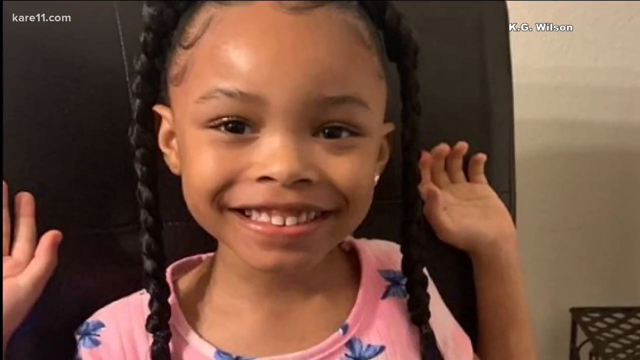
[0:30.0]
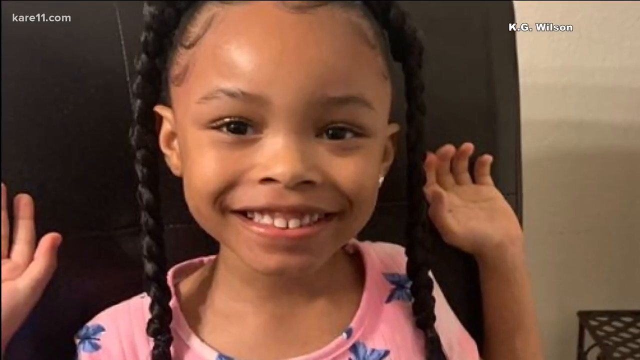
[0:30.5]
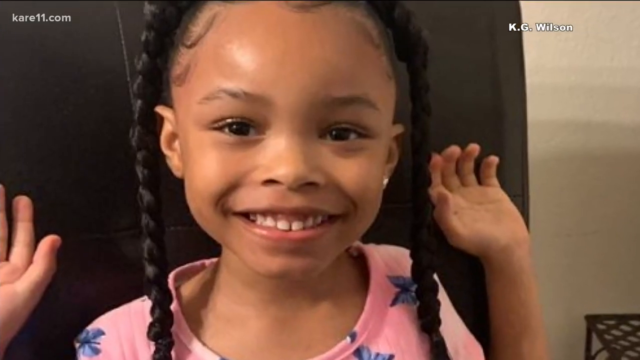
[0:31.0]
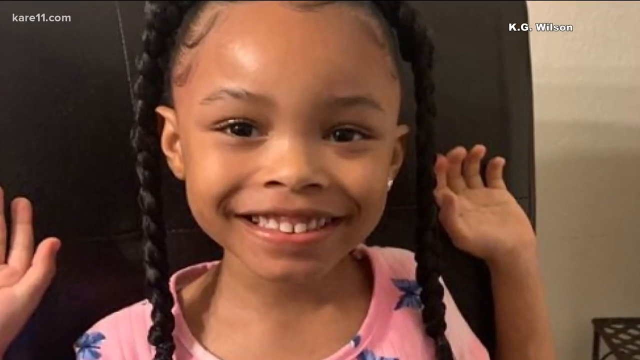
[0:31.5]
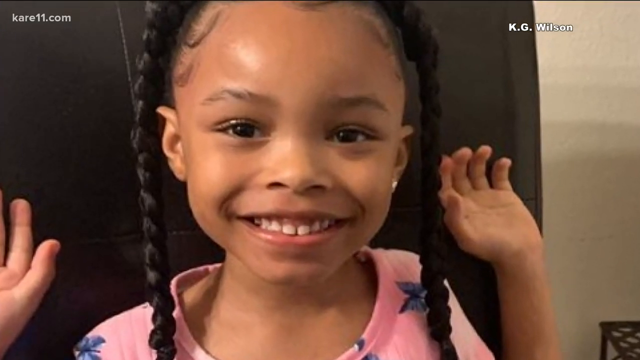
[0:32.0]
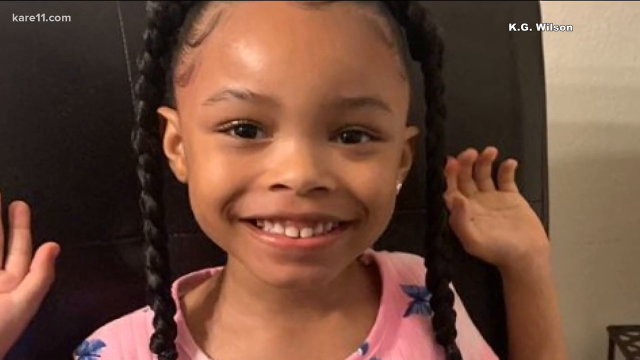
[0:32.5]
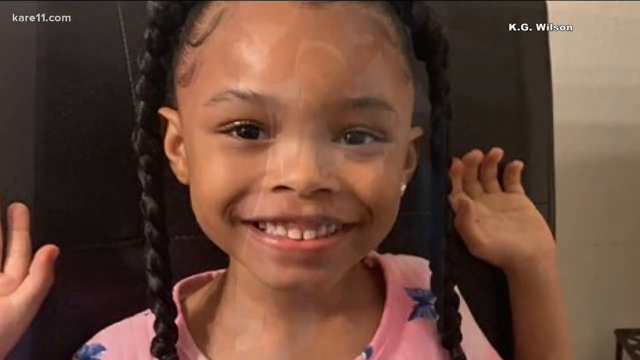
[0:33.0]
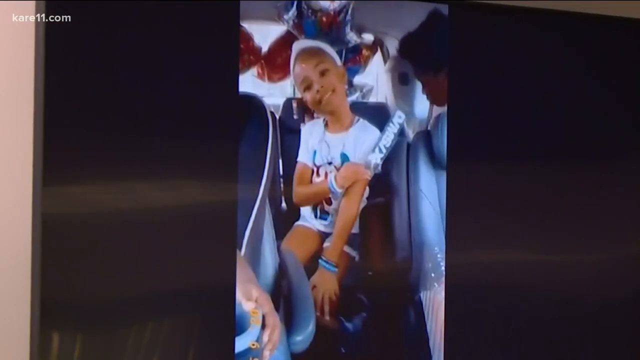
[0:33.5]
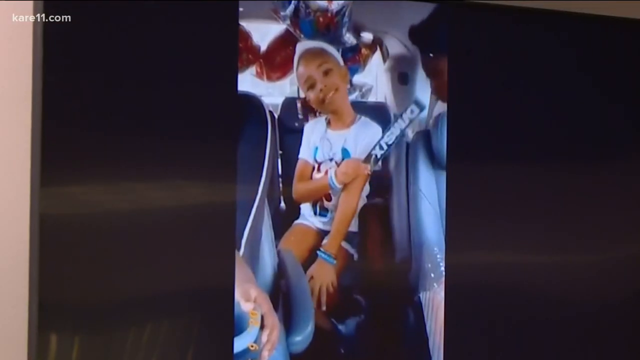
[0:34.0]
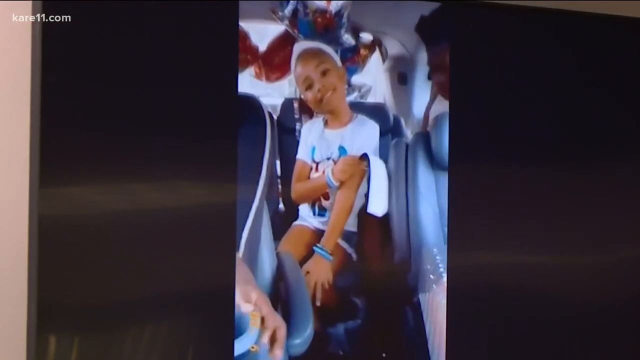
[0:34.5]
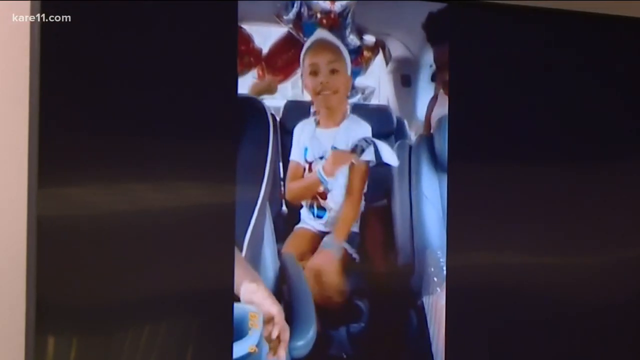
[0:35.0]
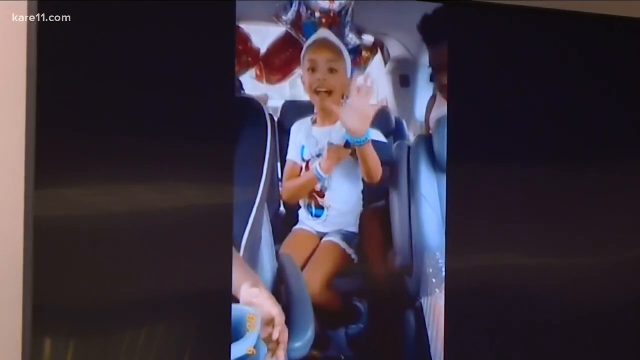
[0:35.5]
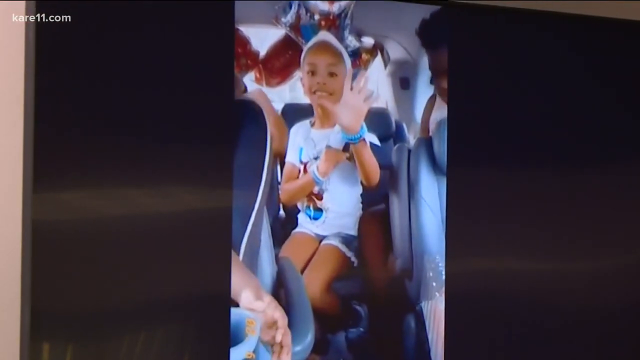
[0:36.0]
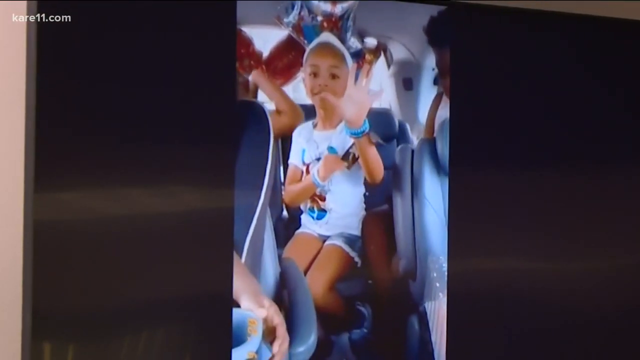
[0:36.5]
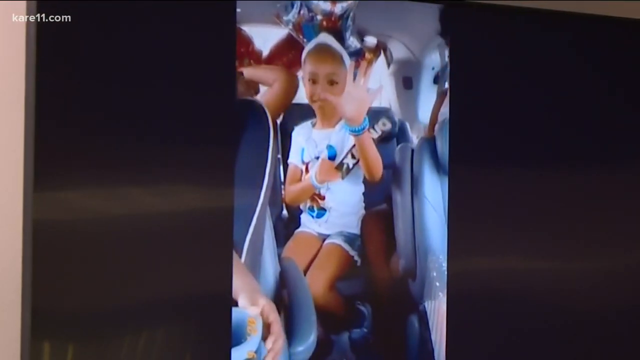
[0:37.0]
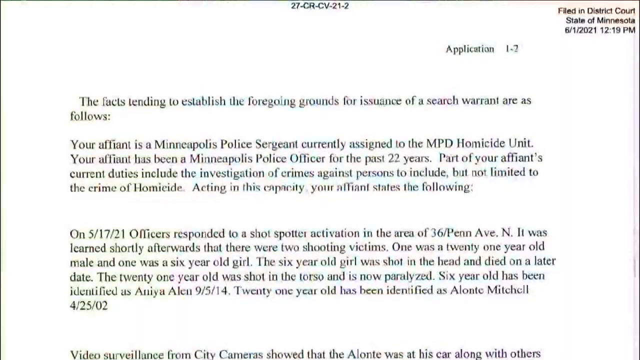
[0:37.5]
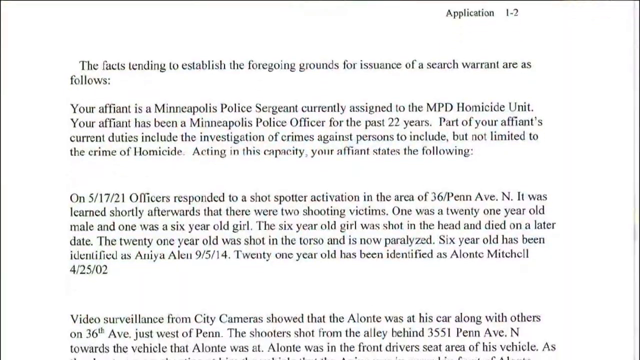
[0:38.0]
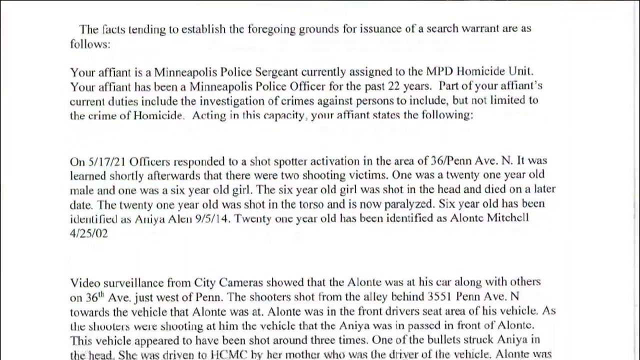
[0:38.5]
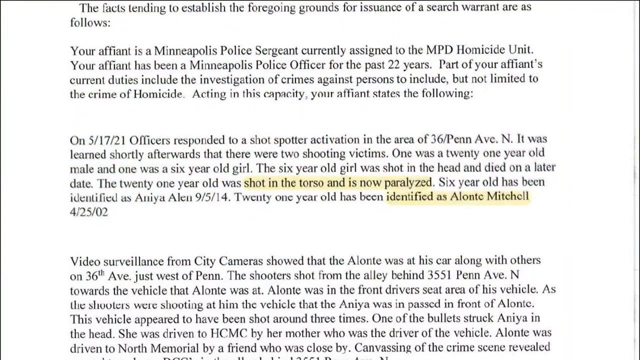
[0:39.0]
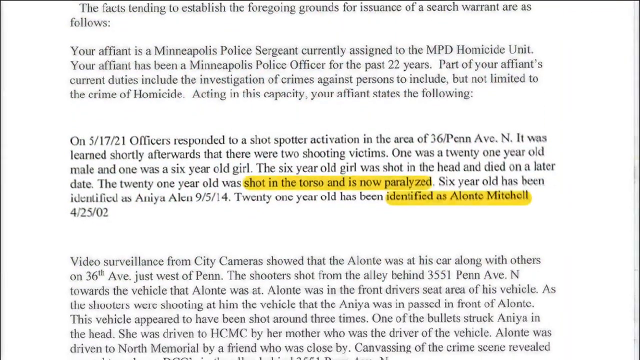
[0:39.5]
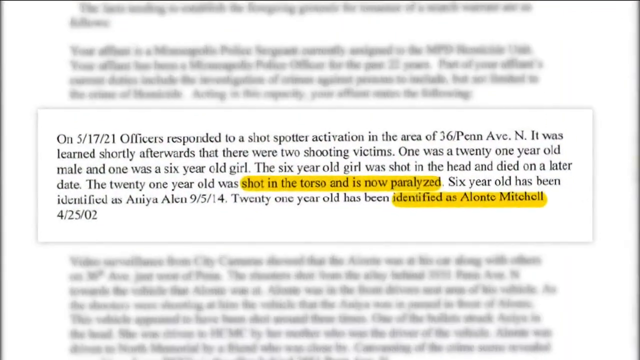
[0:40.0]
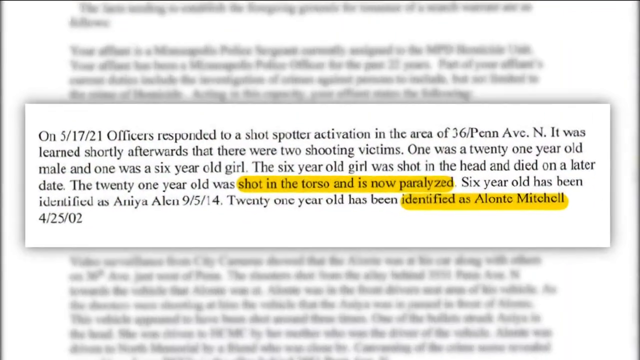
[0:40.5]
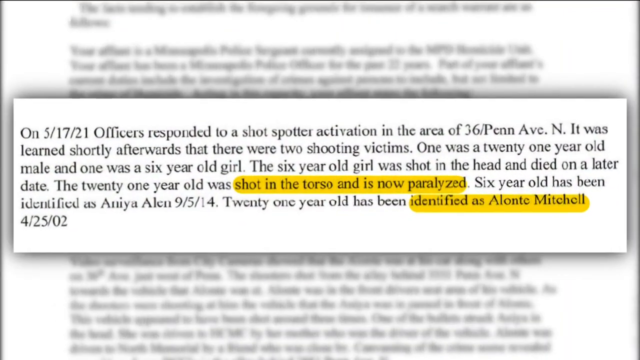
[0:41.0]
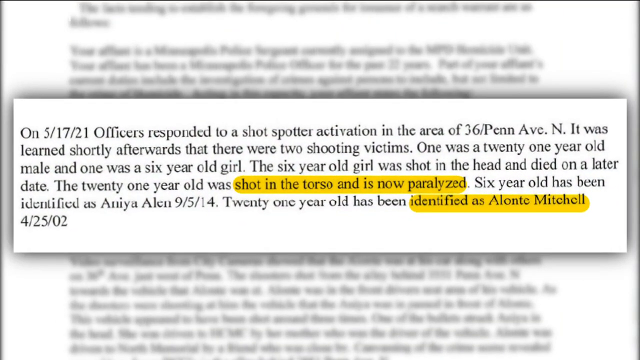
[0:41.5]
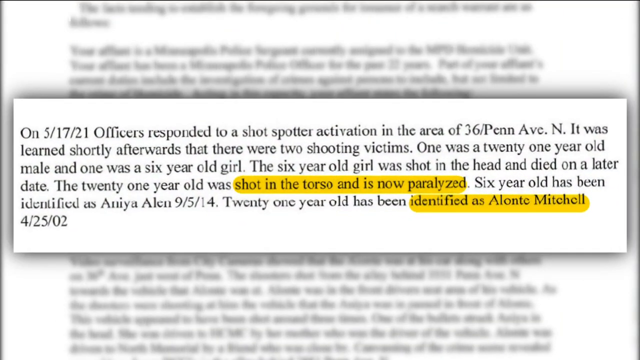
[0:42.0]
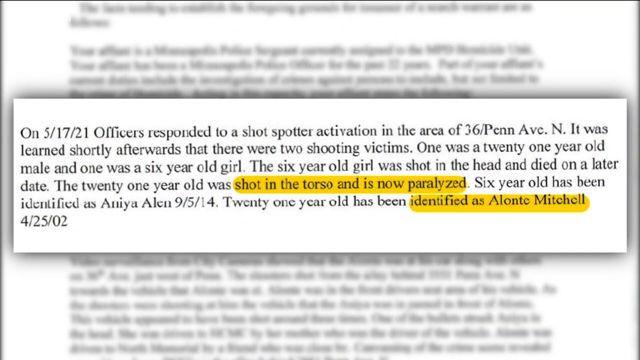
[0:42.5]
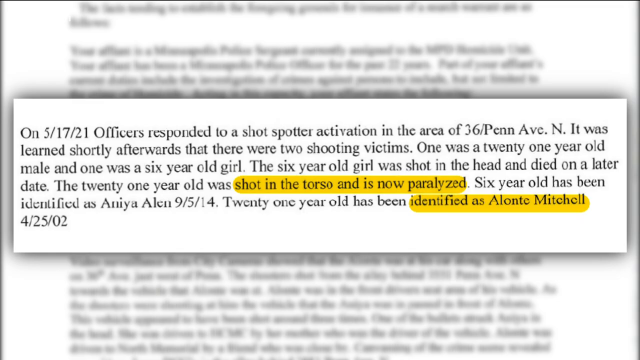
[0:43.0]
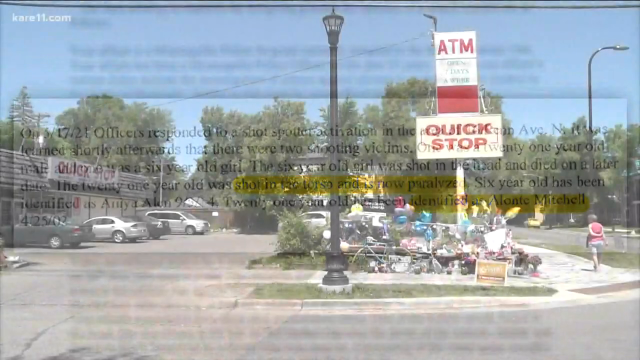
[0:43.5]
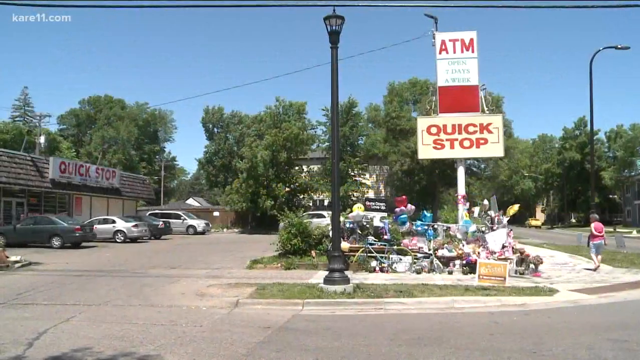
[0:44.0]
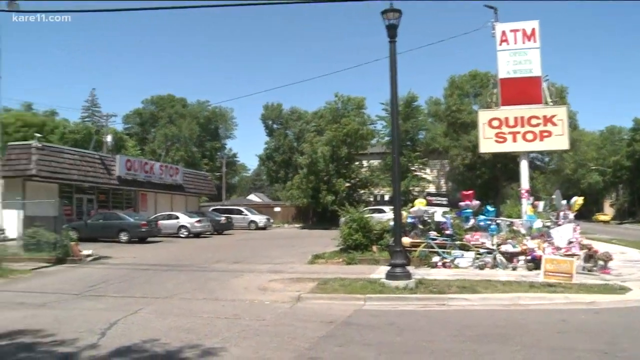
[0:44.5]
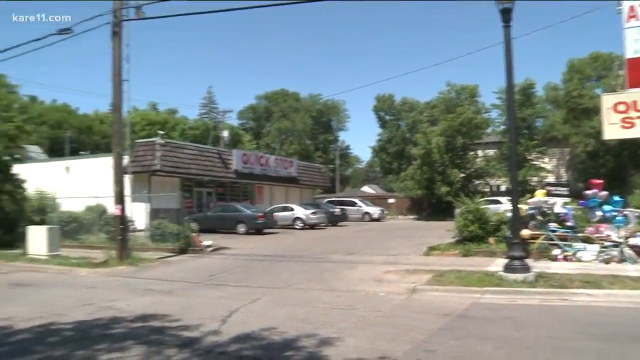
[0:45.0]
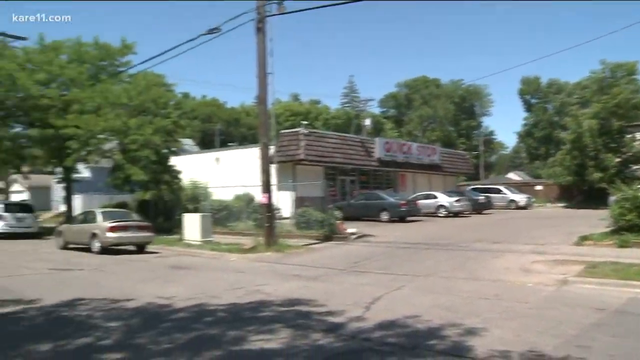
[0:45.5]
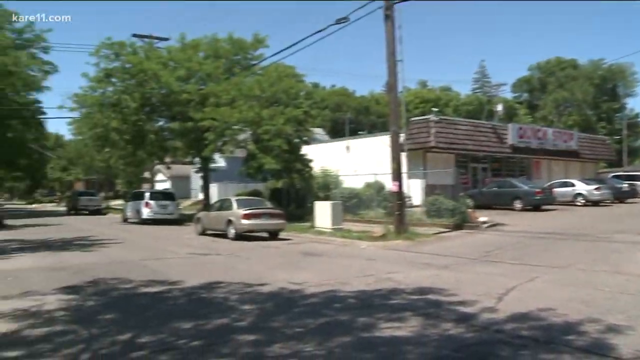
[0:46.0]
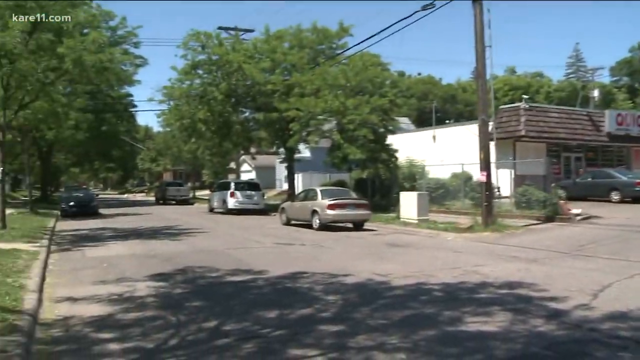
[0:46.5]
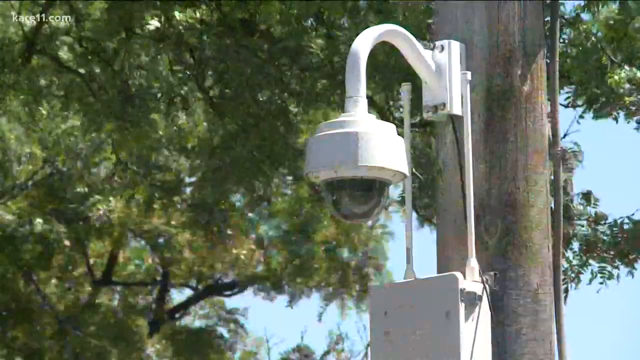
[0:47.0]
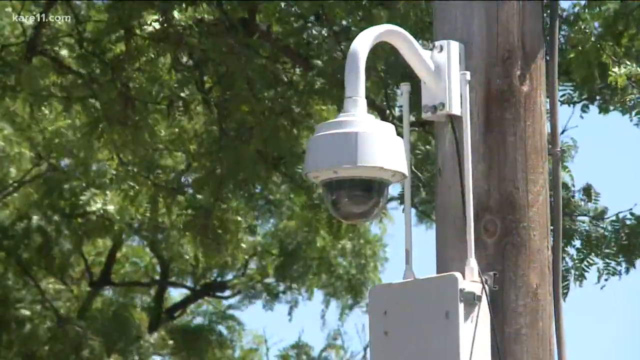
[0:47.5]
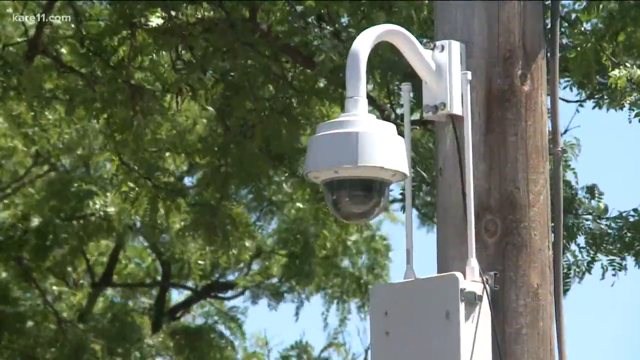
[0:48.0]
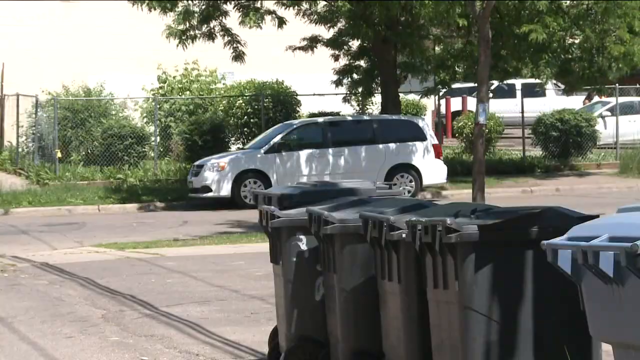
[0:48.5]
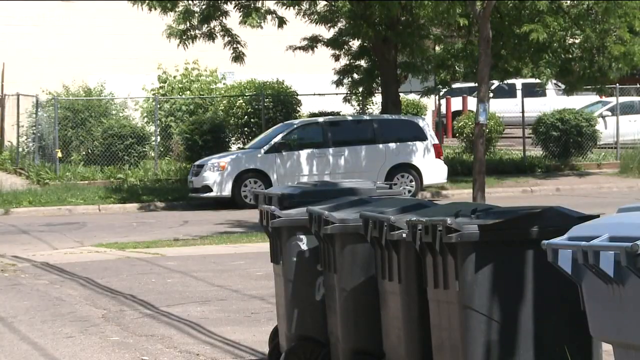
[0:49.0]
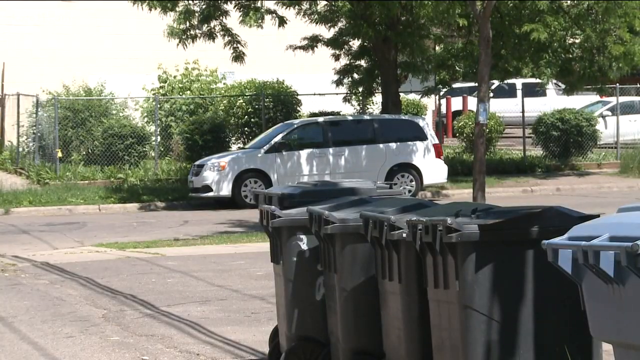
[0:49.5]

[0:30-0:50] The little girl is shown smiling, wearing a pink top with blue butterflies. In what looks like a home video, she says hi and waves with her left hand; it may have been her birthday. Paperwork then lists the facts supporting the search warrant, stating that the affiant is "a Minneapolis police sergeant primarily assigned to the MPD homicide unit" who has been with the force for the past 22 years. It says that on May 17th 2001 officers responded to a shot spotter activation in the area of 36th and Penn Avenue North, and that there were two shooting victims: a 21-year-old male and a six-year-old girl. The six-year-old girl was shot in the head and died on a later day; the 21-year-old was shot in the torso and is now paralyzed.